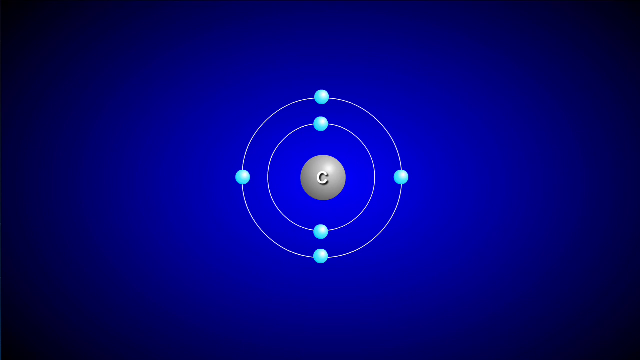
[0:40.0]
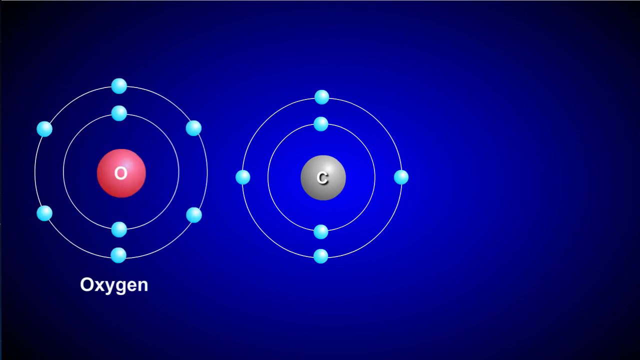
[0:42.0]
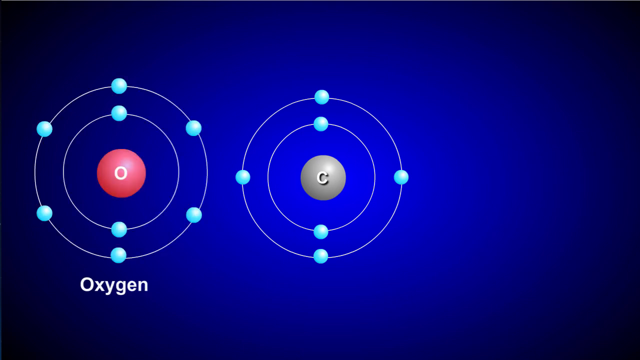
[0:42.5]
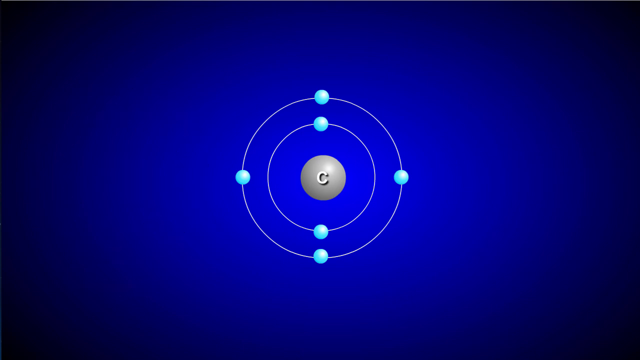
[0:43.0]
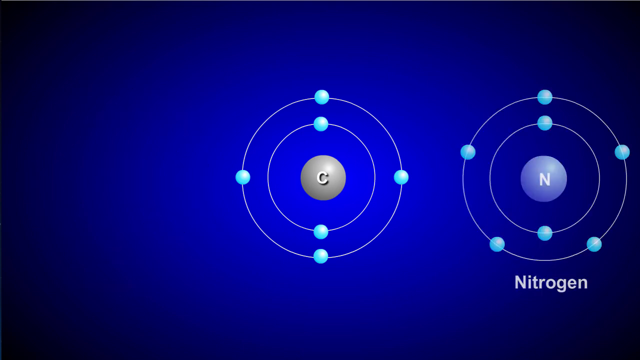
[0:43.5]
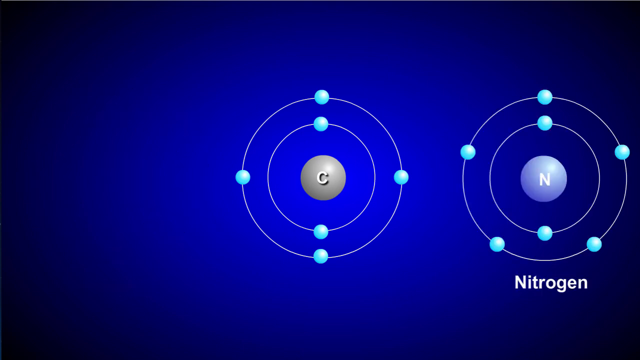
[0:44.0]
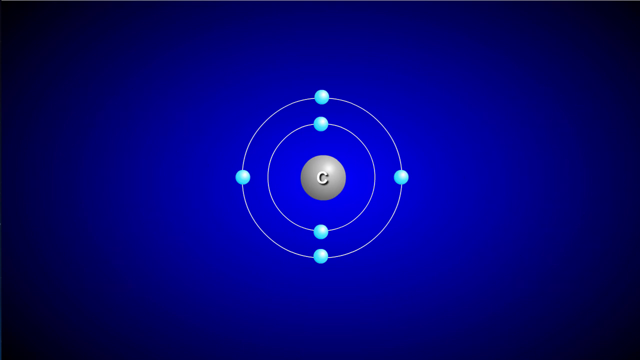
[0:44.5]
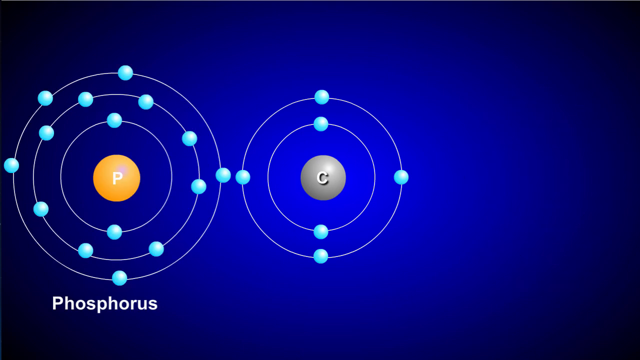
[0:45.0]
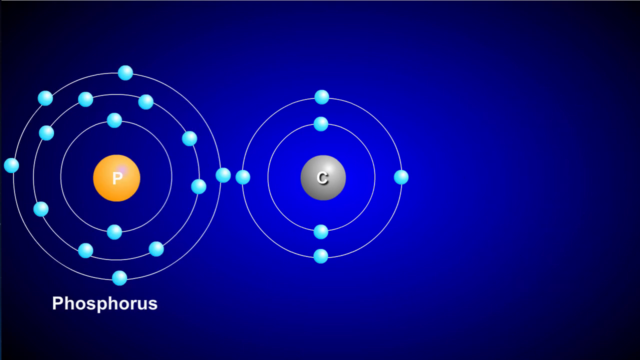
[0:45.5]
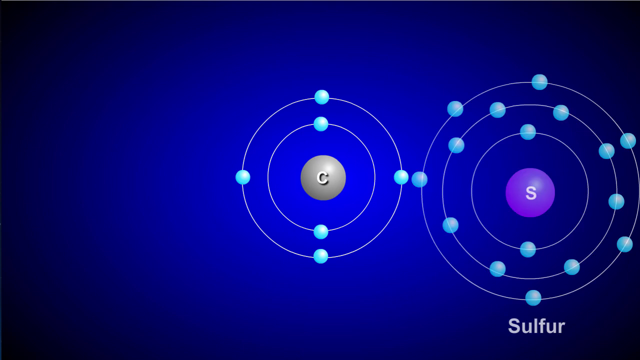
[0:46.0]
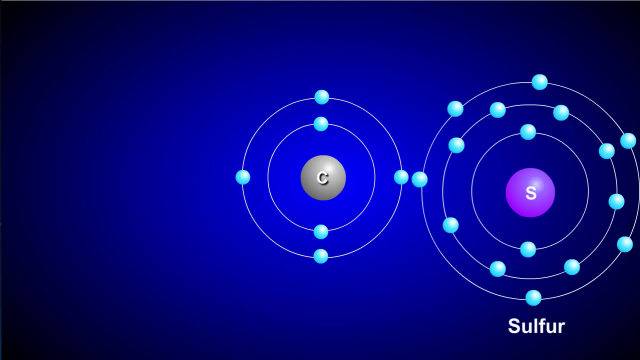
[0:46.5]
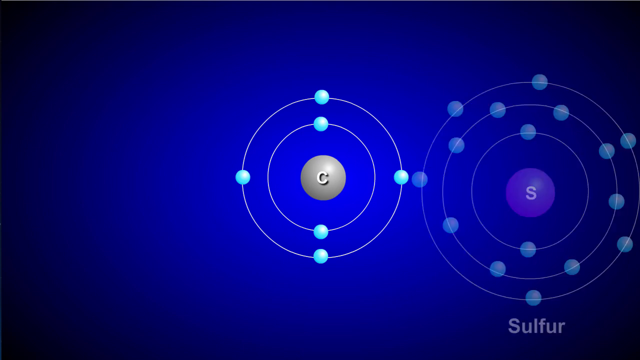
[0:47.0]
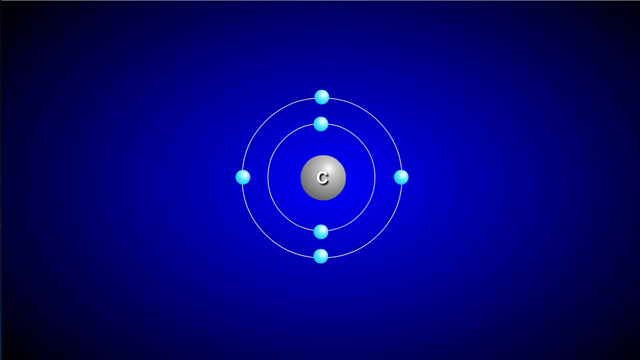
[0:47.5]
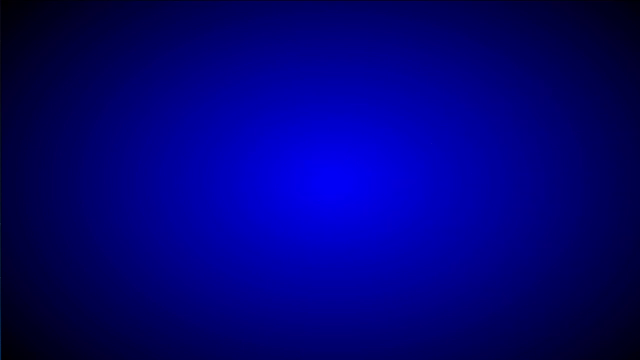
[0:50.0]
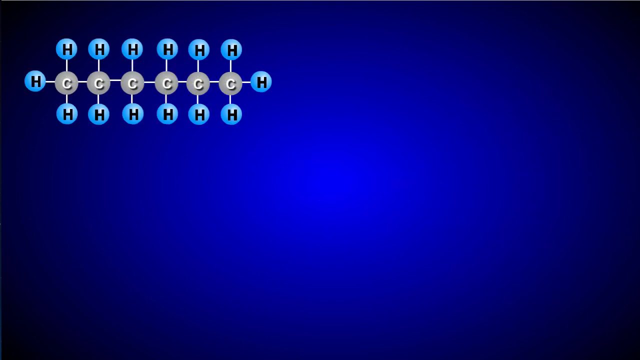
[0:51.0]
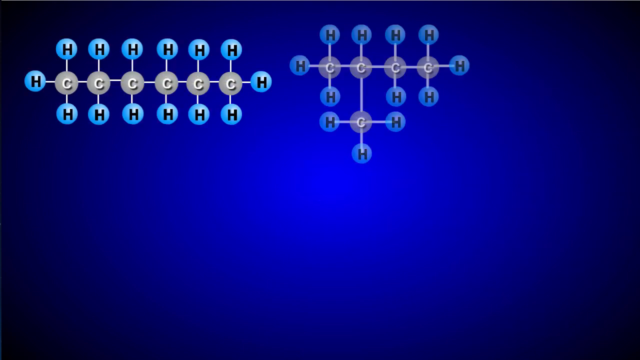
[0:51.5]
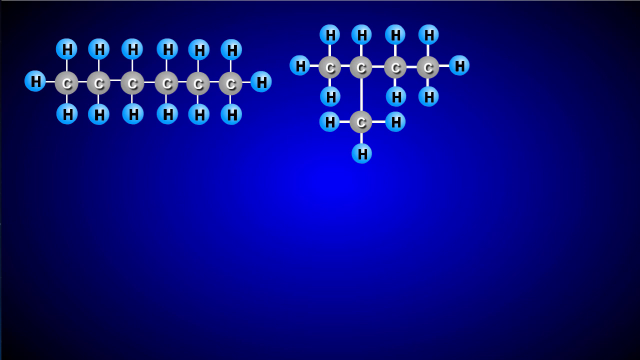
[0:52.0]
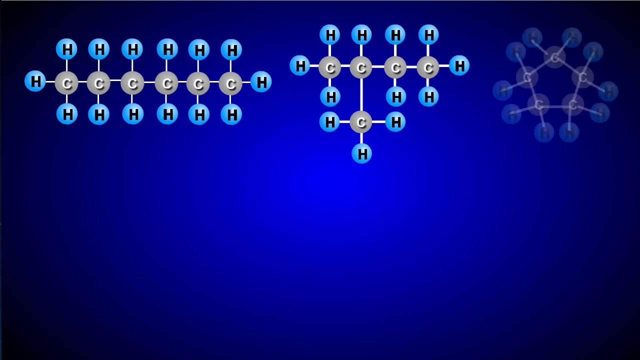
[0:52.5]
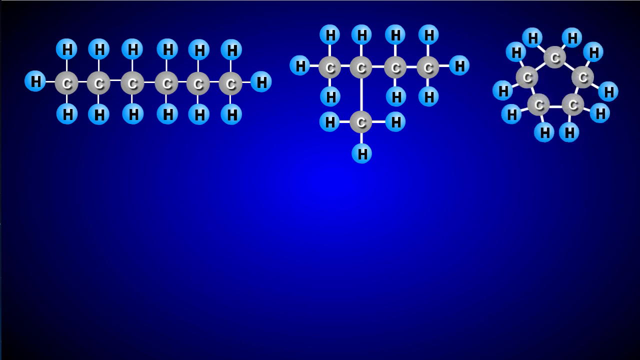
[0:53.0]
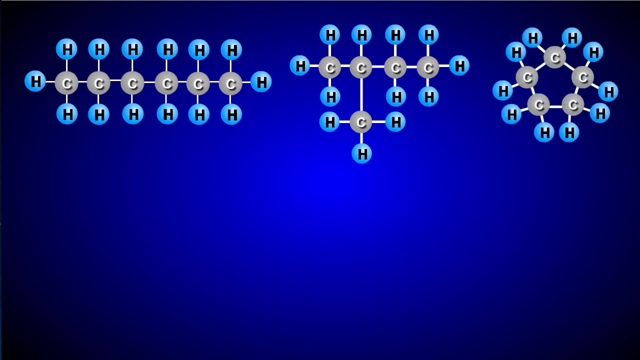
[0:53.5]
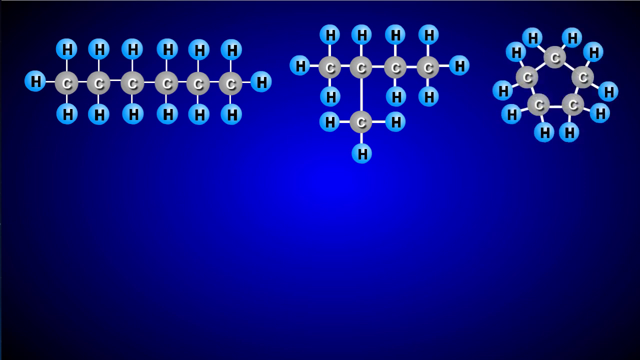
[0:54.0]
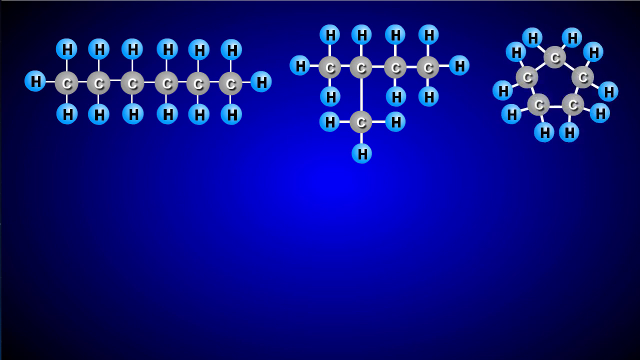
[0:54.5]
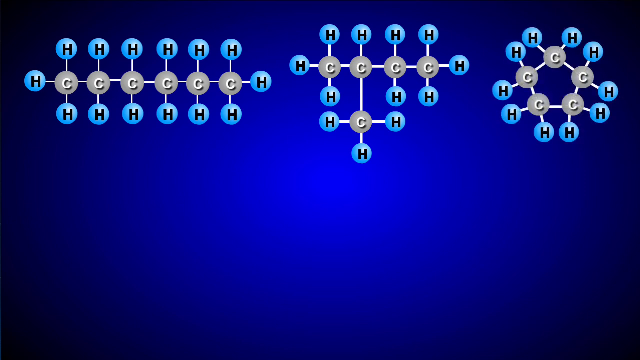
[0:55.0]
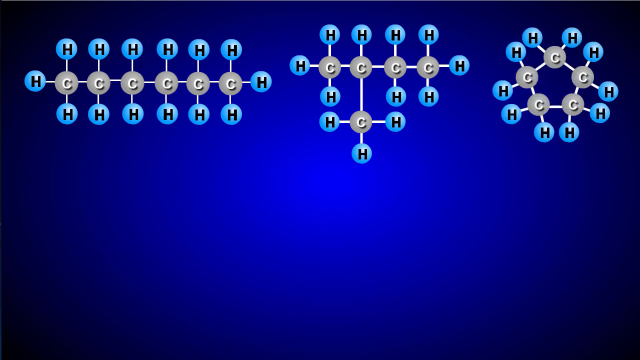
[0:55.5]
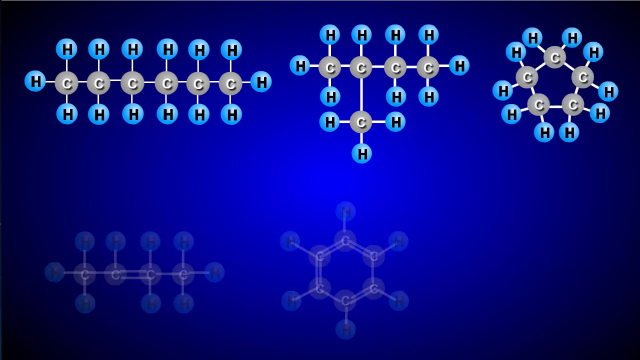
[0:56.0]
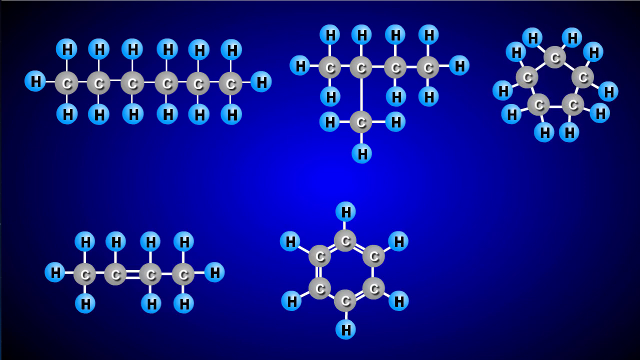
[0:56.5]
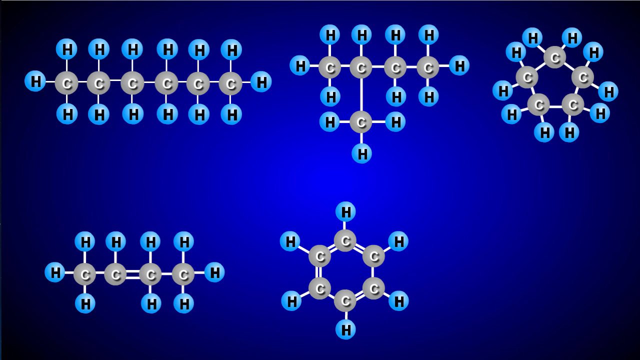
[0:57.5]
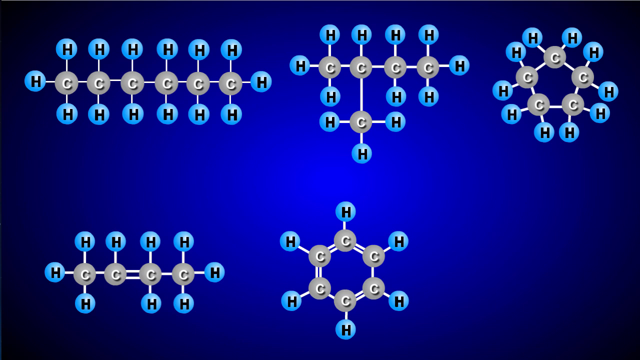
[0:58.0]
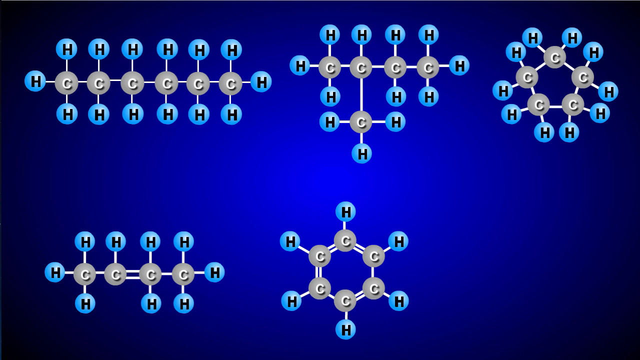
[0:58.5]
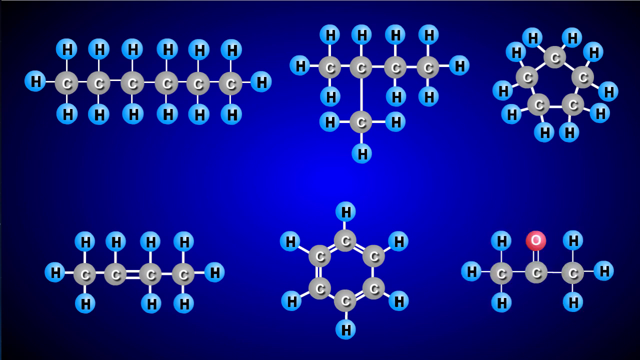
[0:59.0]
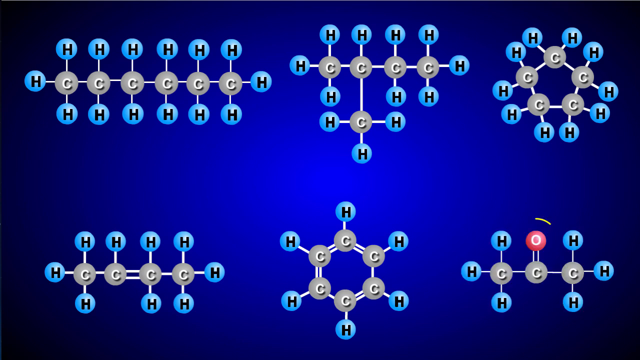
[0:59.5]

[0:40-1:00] Several different elements in the area react with the same carbon molecules inside a group.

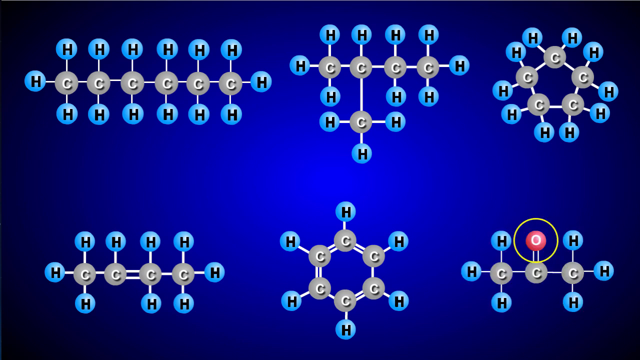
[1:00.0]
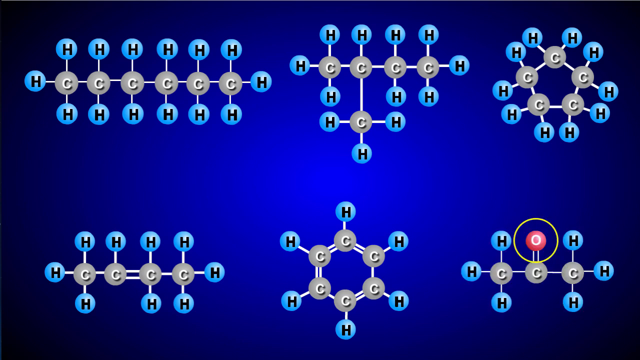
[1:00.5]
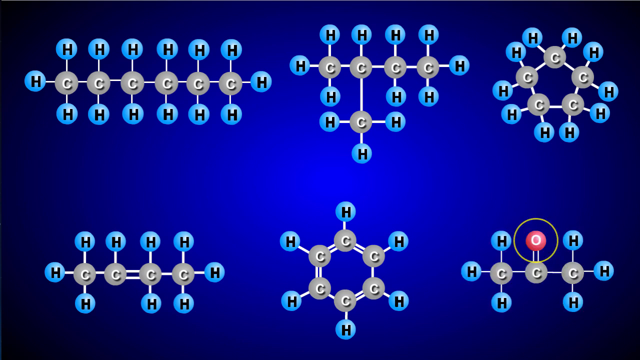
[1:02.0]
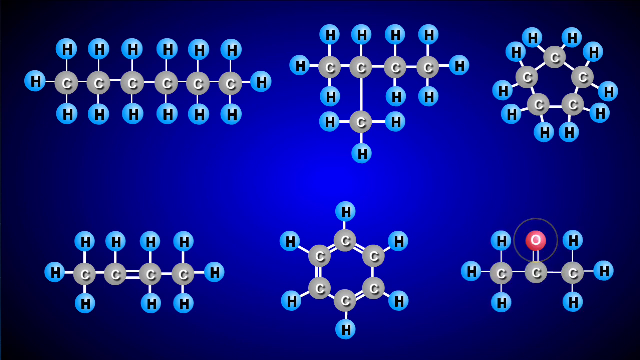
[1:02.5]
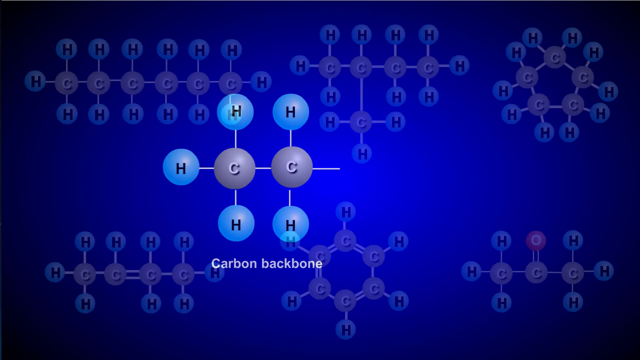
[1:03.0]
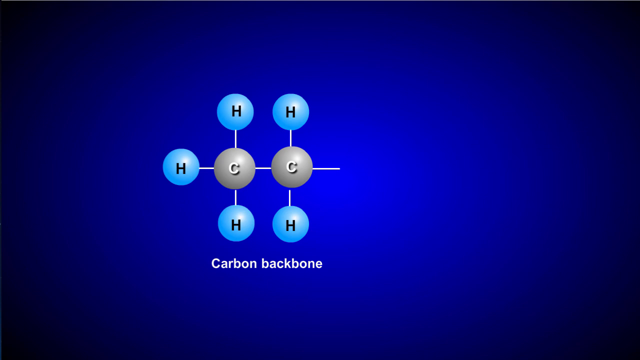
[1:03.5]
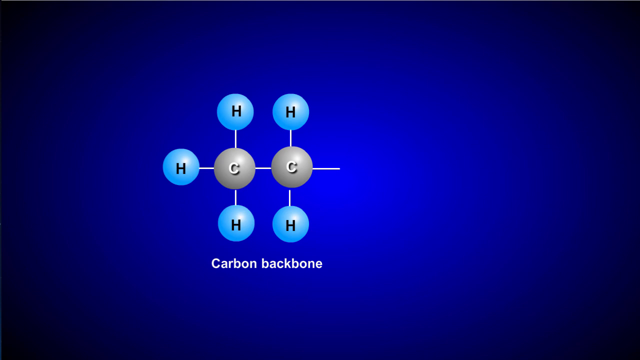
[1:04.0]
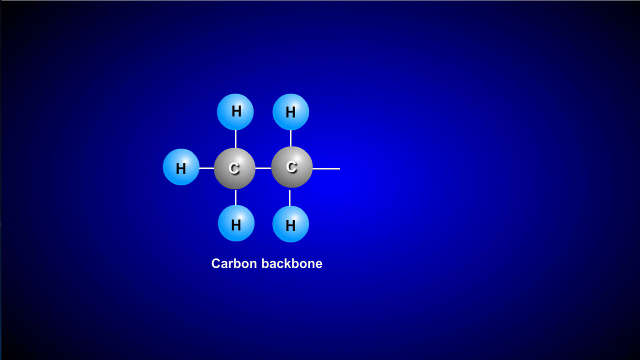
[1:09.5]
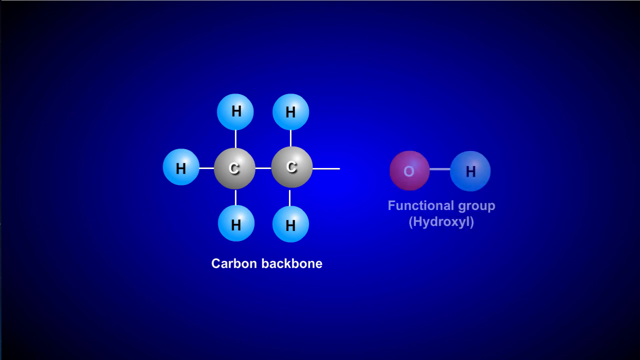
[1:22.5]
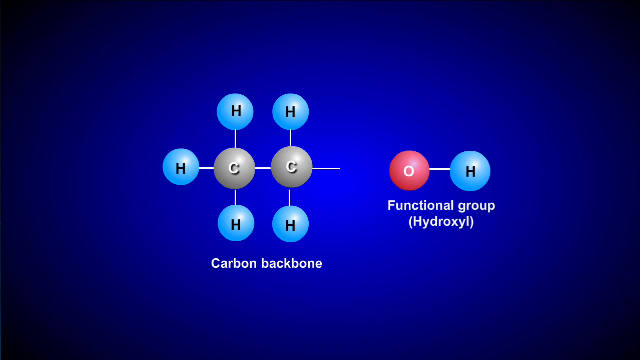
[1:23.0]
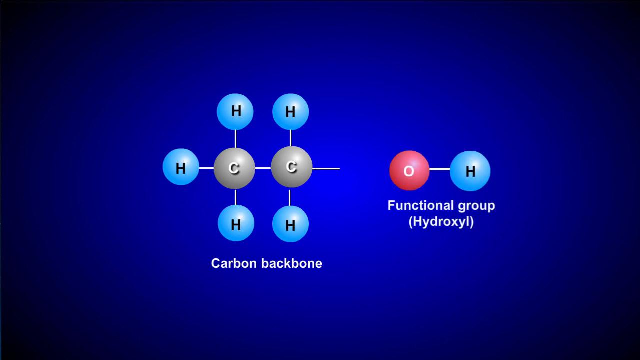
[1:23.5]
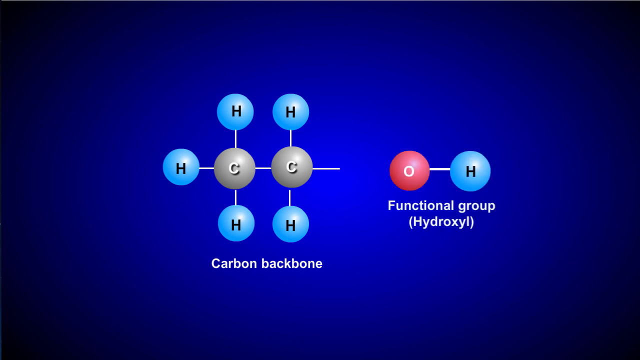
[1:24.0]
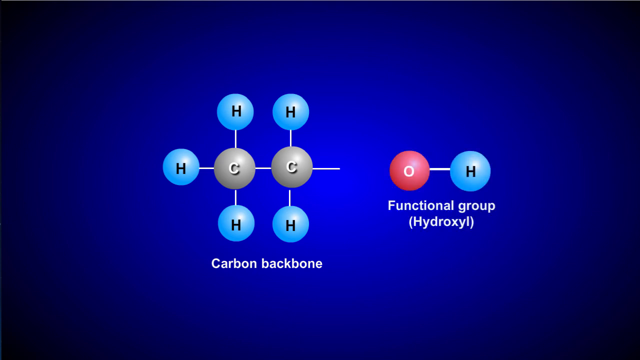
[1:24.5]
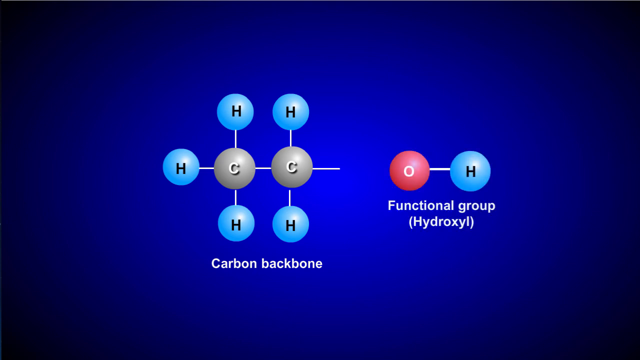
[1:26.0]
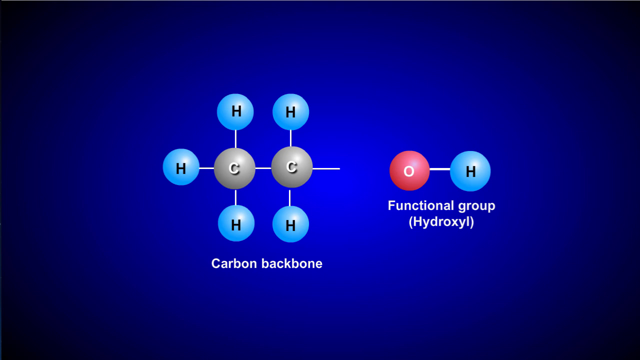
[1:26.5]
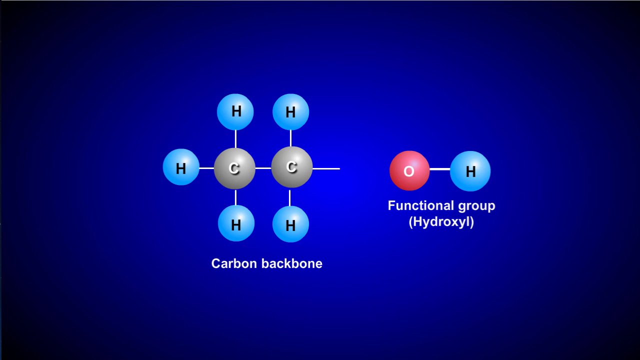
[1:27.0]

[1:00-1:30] A diagram shows an array of molecules ordered in a 3 by 2 arrangement, with a carbon background.